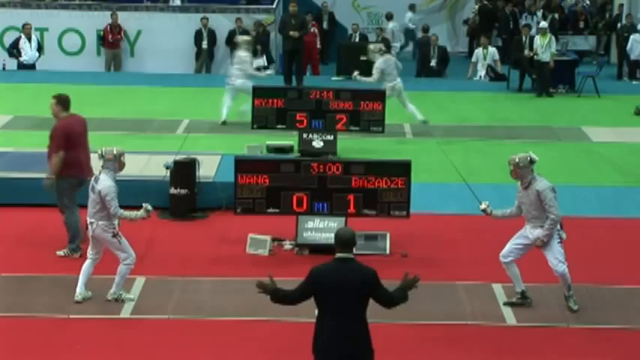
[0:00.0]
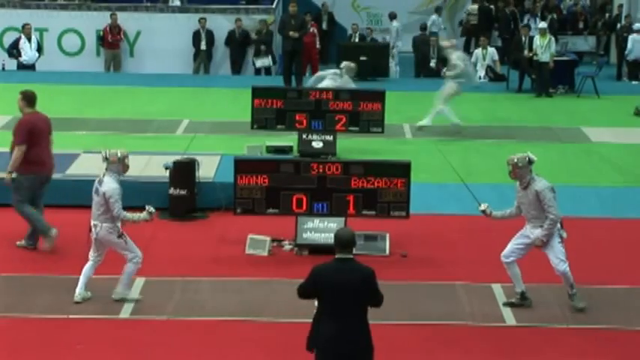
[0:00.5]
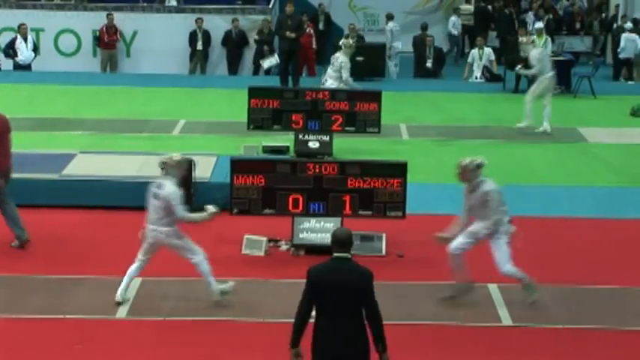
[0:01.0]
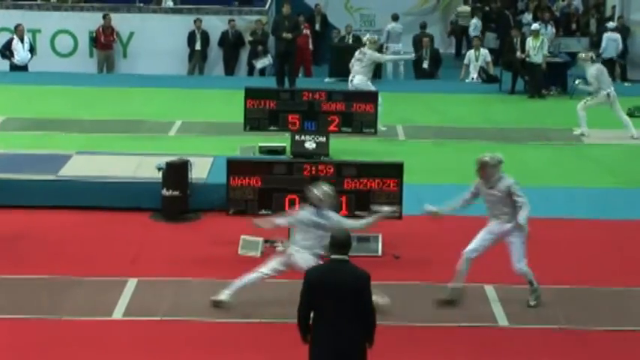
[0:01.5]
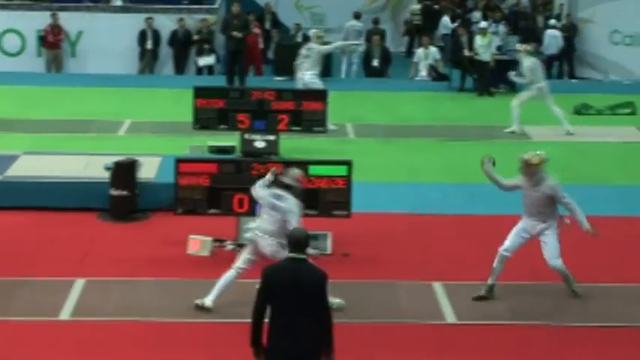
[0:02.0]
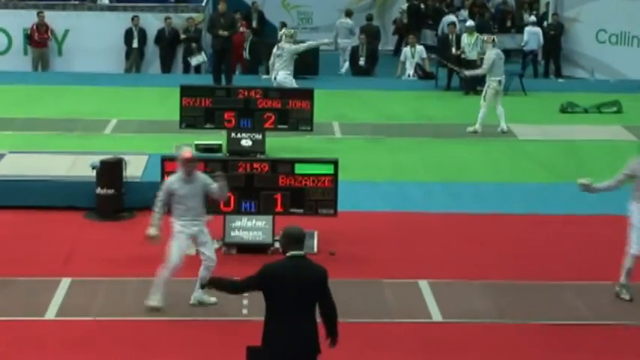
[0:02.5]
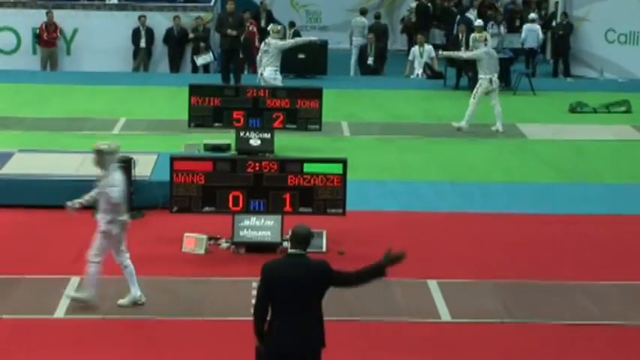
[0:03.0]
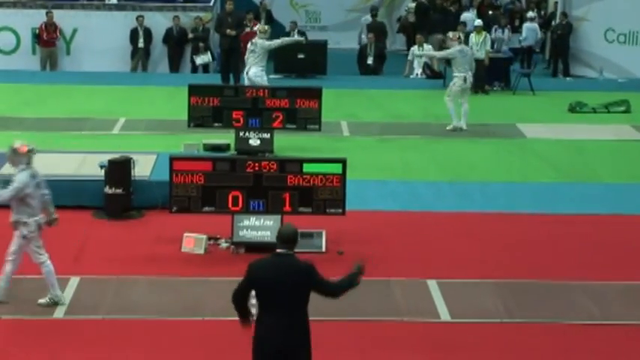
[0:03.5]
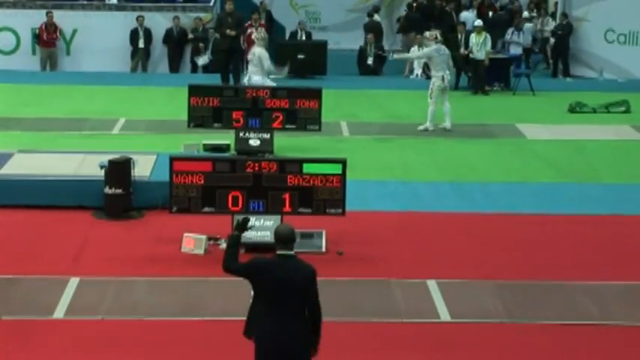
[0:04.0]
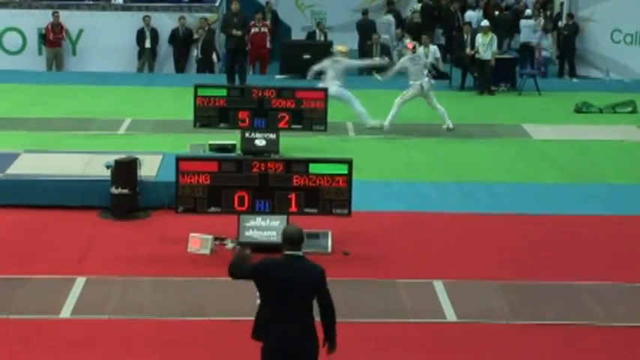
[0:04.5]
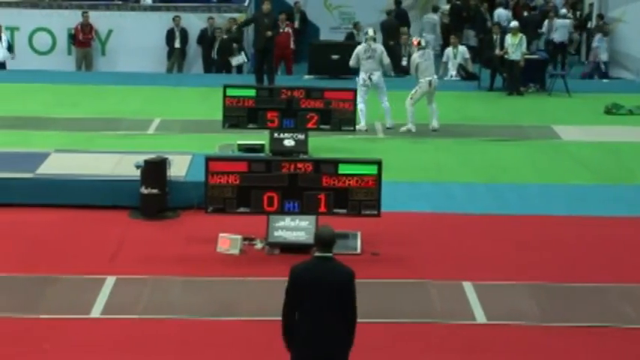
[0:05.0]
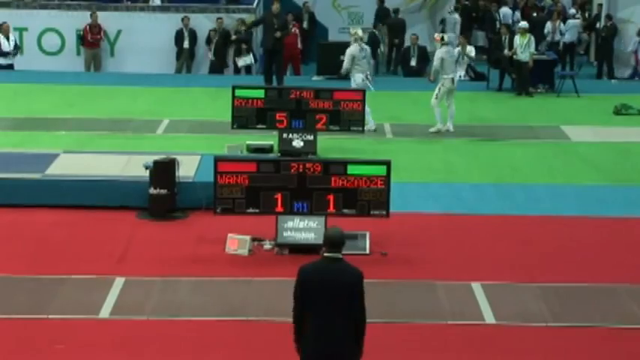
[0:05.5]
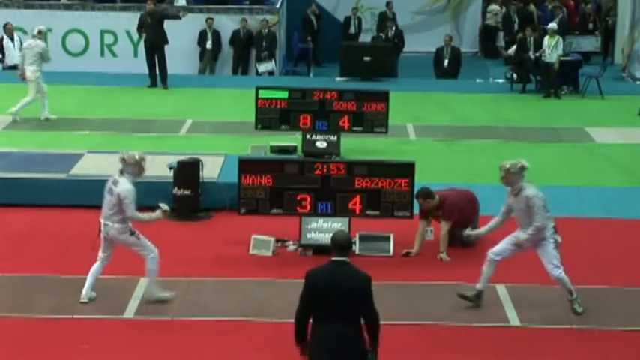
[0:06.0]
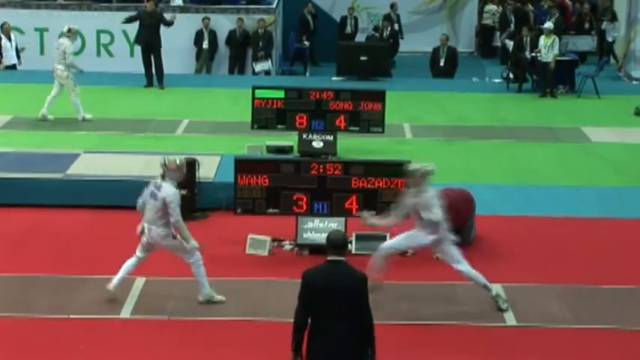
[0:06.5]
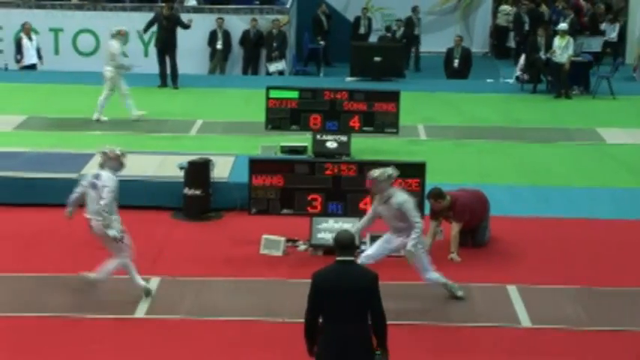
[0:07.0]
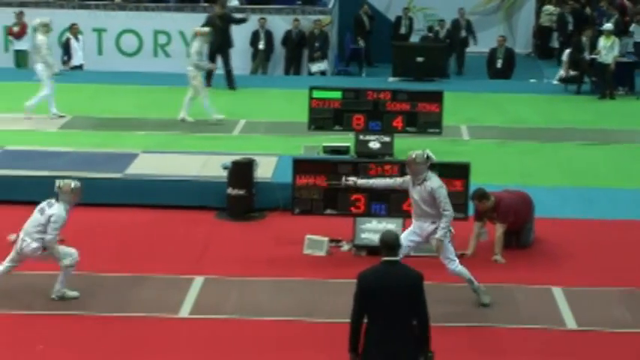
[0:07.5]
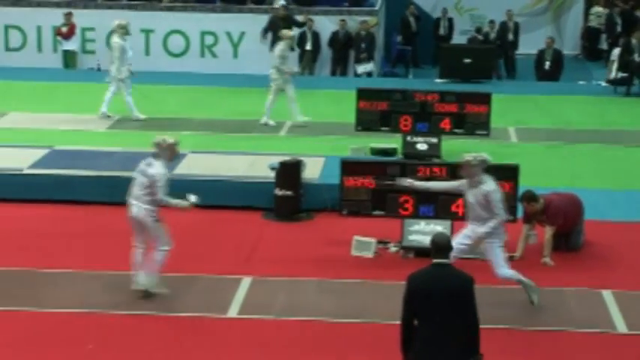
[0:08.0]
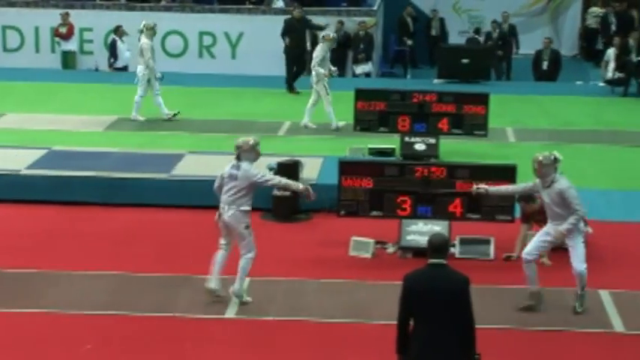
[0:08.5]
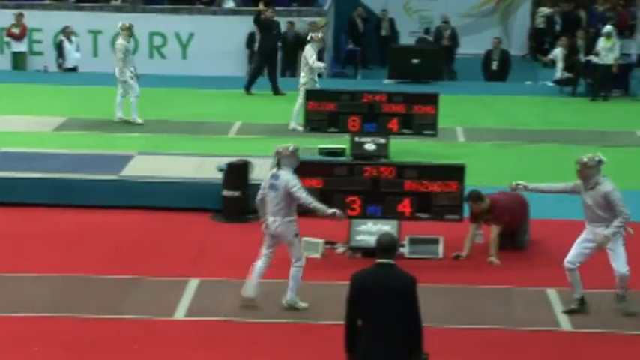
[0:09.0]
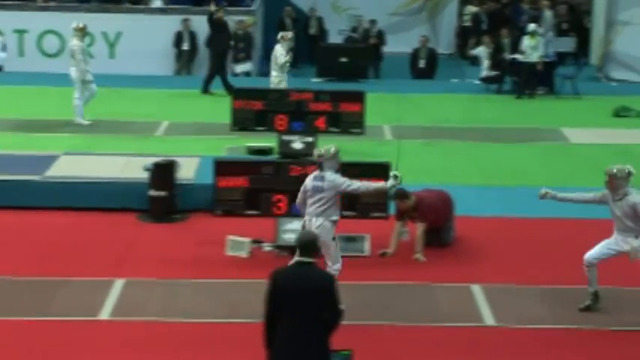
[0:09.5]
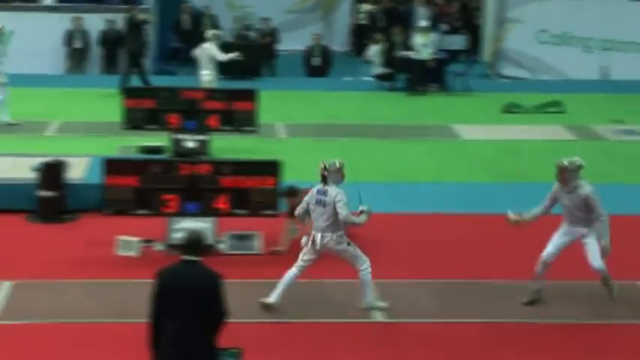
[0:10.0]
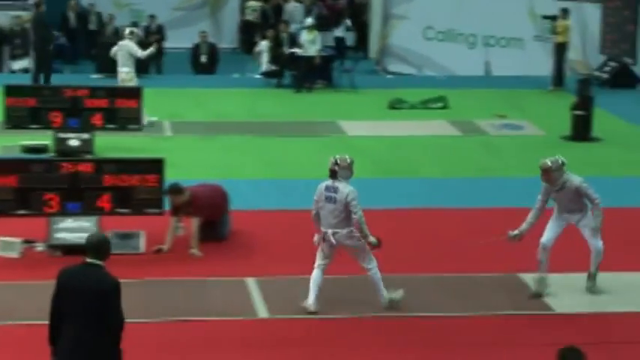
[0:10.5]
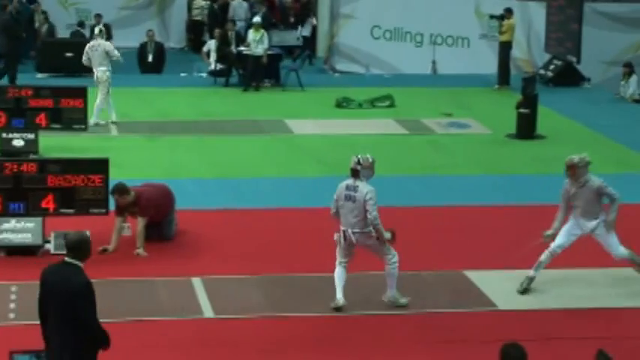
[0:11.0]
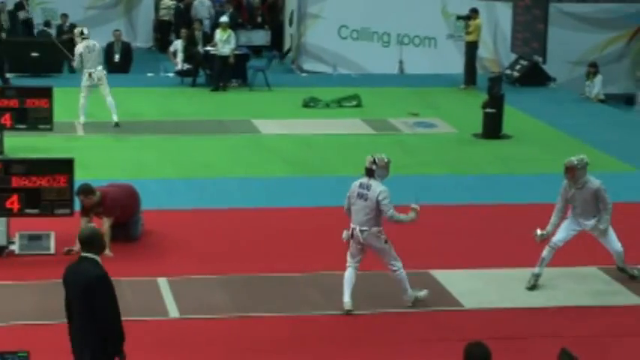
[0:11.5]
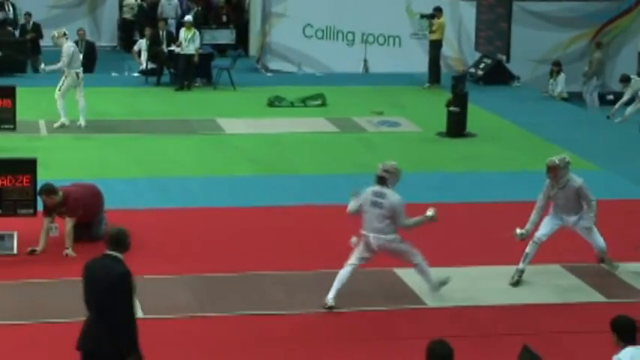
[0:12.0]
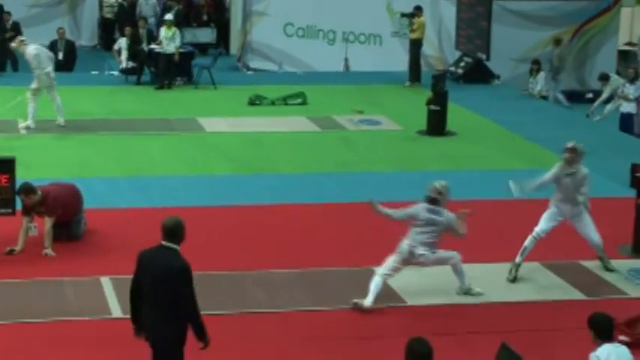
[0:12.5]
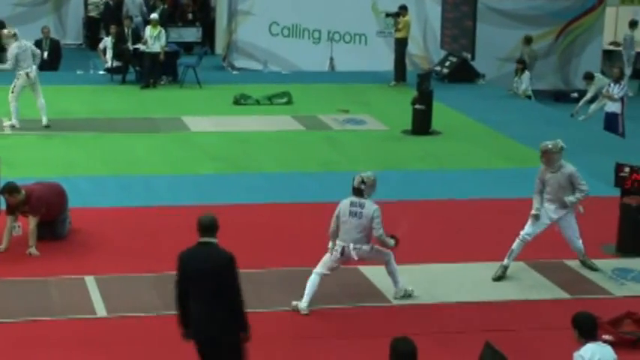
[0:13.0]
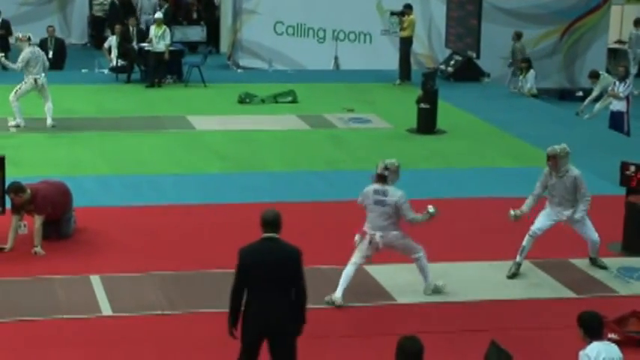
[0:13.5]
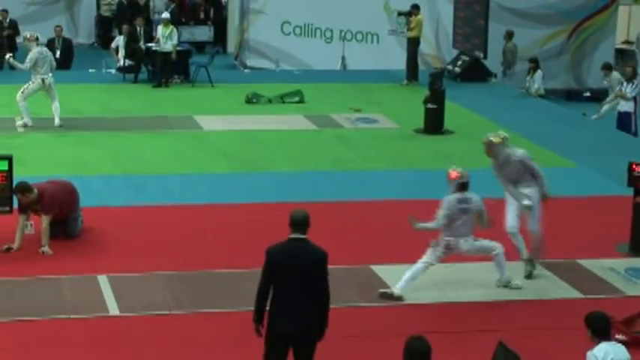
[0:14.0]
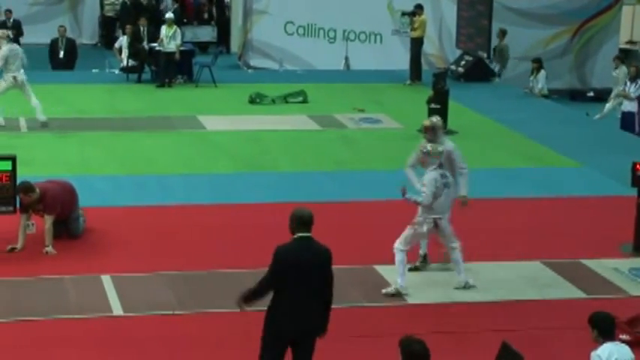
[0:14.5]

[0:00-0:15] Two male fencers compete in a fencing match. Two fencing matches are going on, one in the back and one in the forefront. One of the fencers looks to be Wang and the other looks to be Bazadze. The initial score is Wang 0, Bazadze 1. As the video starts, Wang scores a point. The video then cuts, and Bazadze is up 4-3. Wang then scores another point, tying the score at 4-4. Both fencers appear to be competing in some sort of fencing tournament.